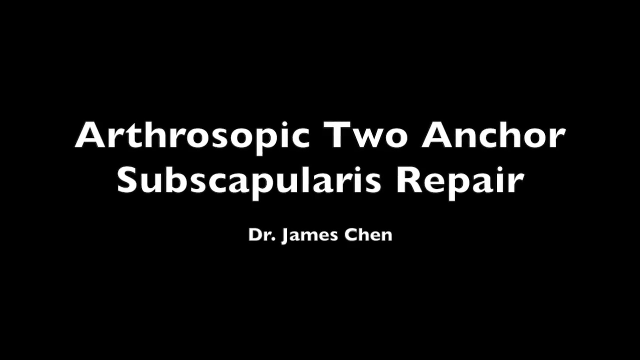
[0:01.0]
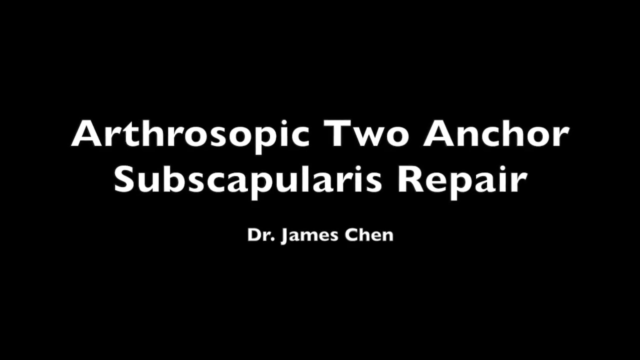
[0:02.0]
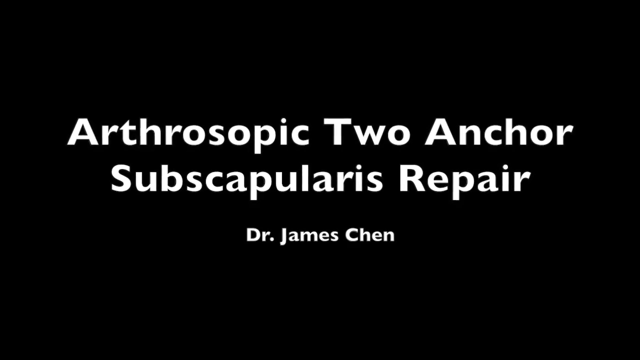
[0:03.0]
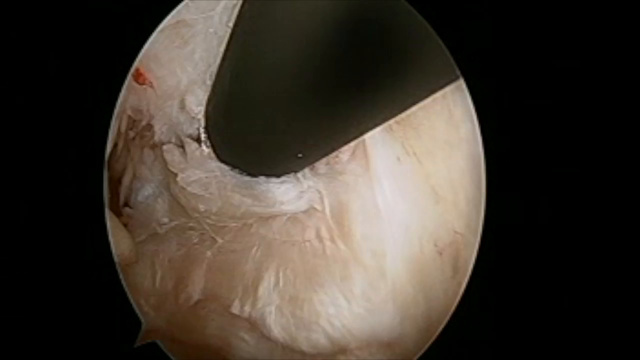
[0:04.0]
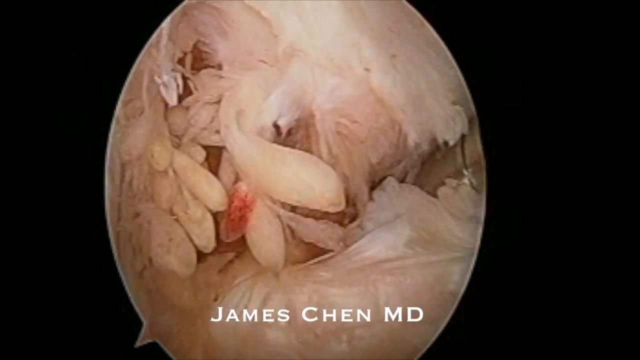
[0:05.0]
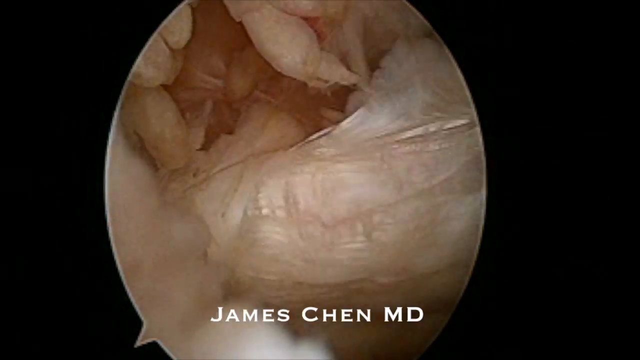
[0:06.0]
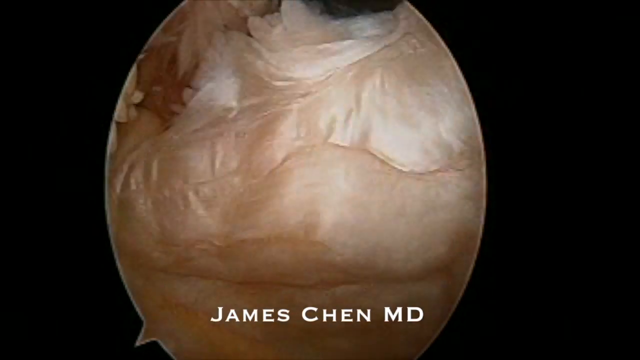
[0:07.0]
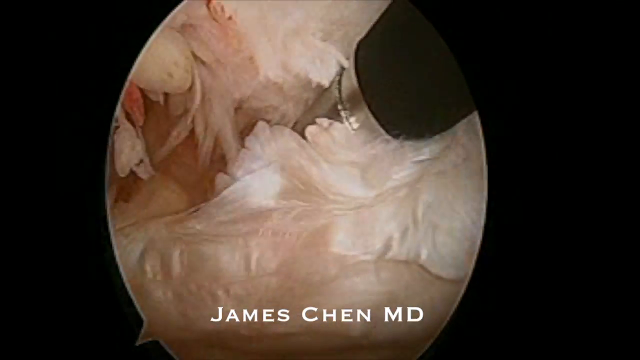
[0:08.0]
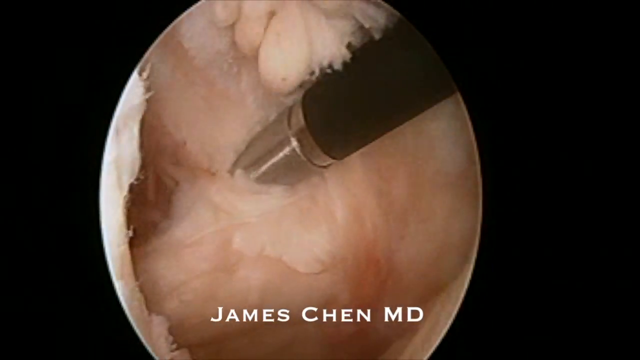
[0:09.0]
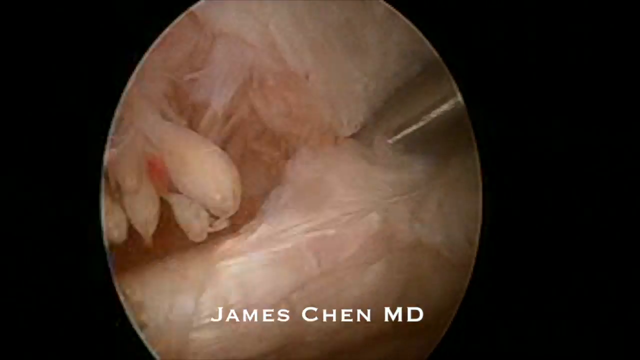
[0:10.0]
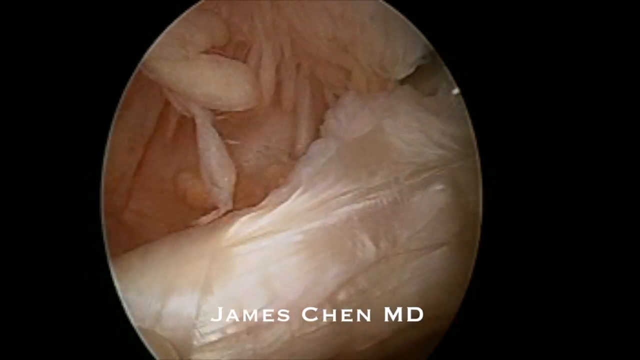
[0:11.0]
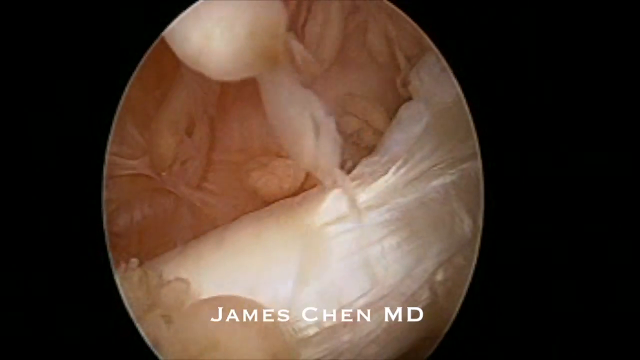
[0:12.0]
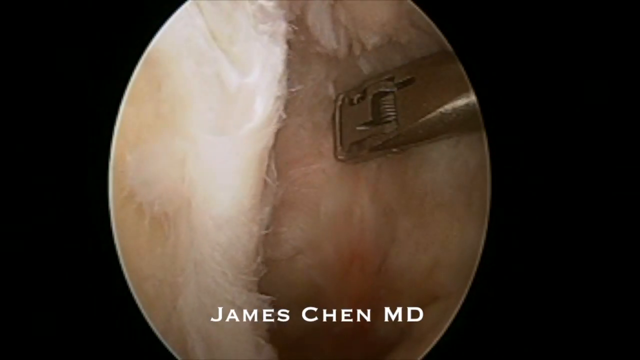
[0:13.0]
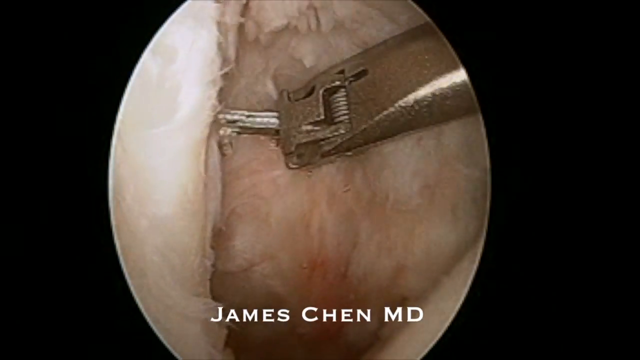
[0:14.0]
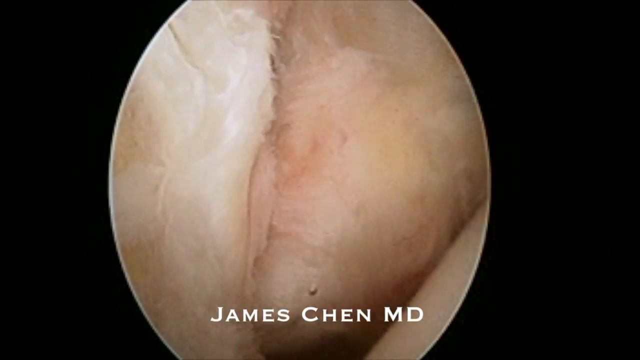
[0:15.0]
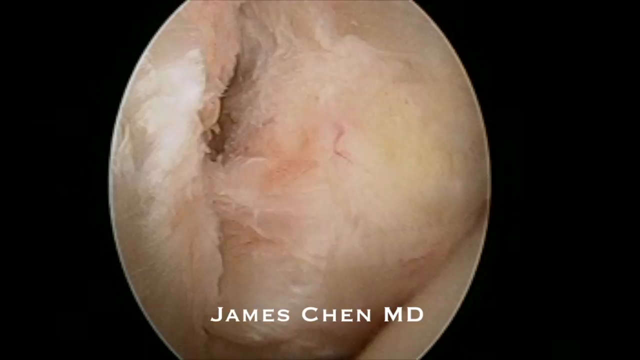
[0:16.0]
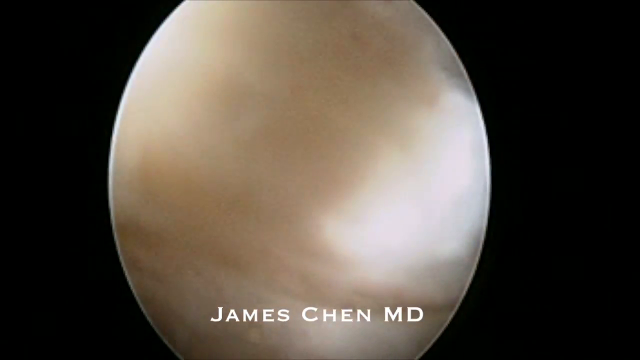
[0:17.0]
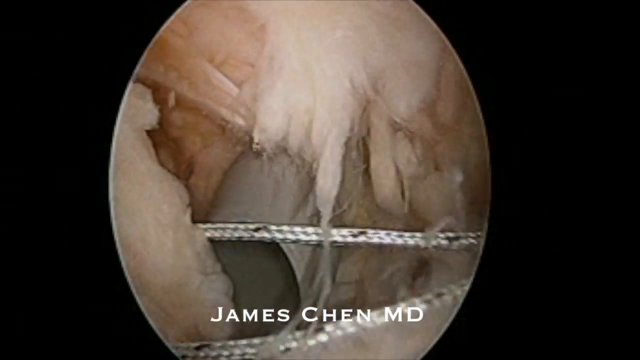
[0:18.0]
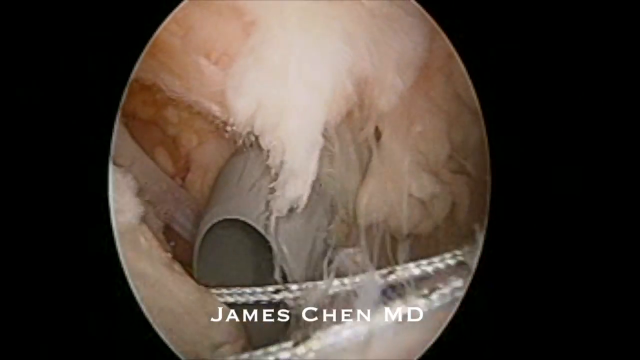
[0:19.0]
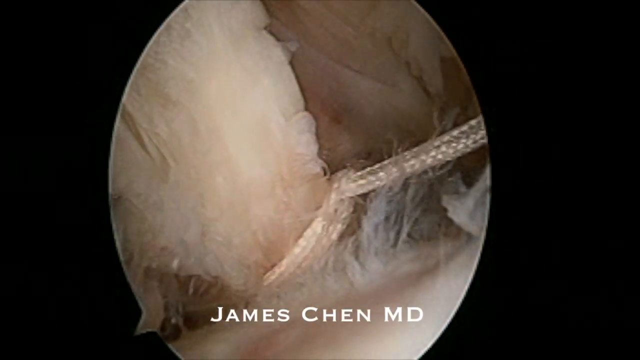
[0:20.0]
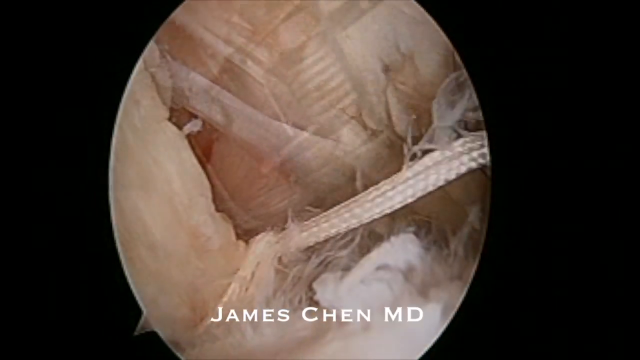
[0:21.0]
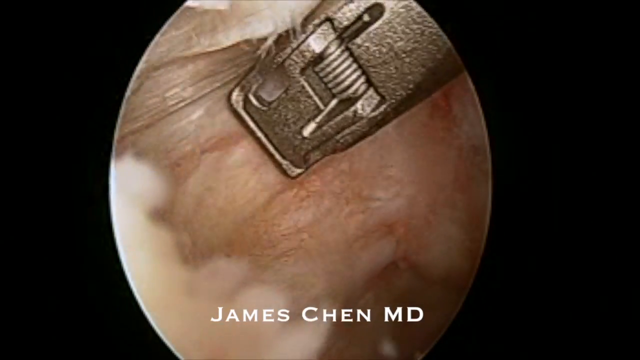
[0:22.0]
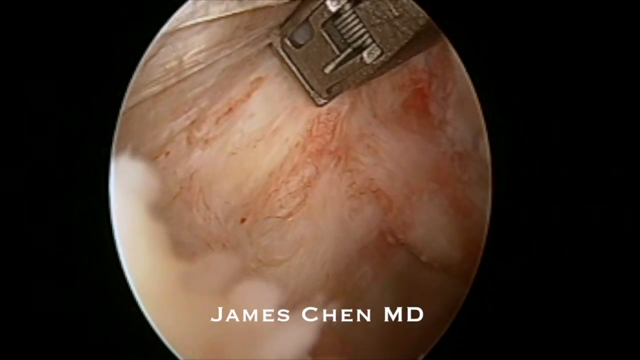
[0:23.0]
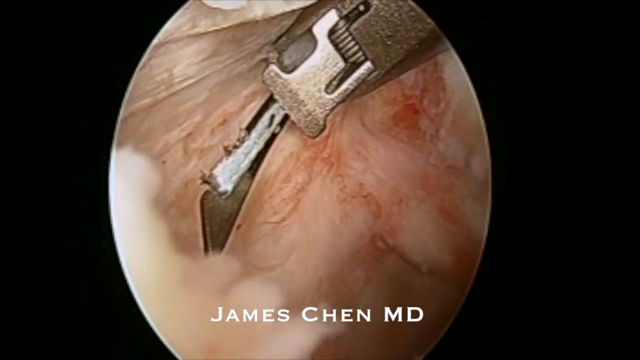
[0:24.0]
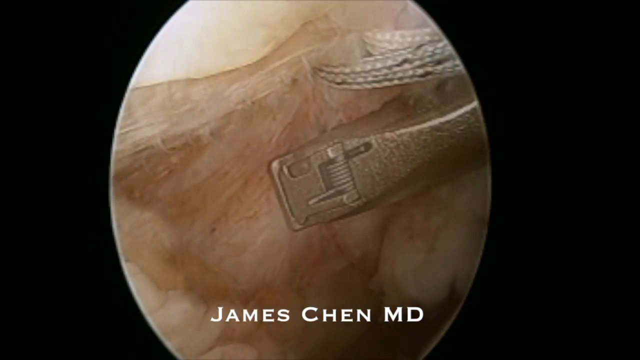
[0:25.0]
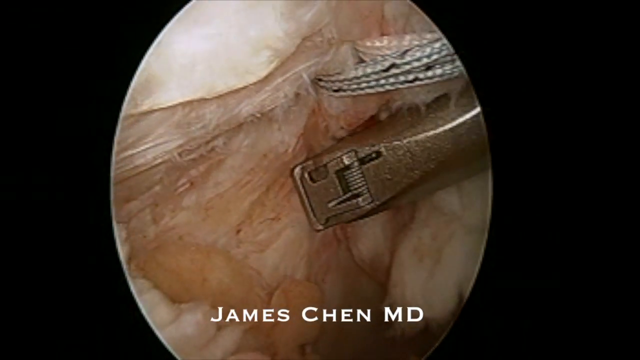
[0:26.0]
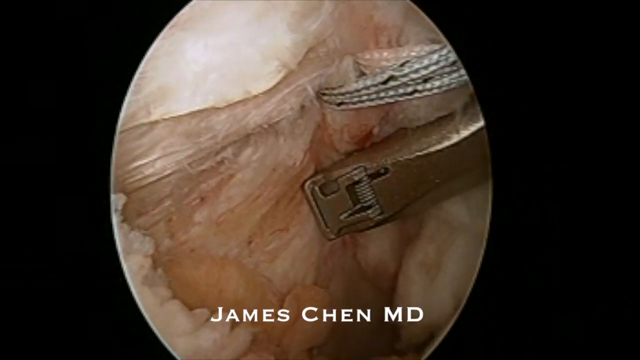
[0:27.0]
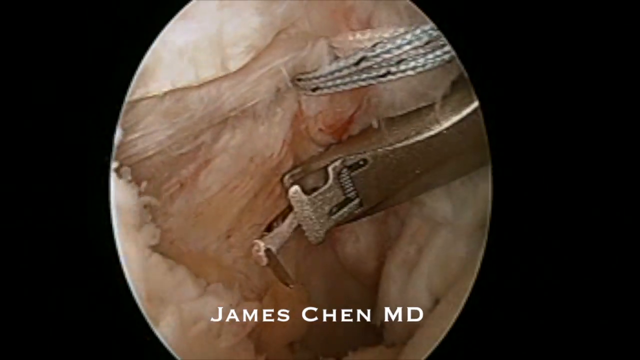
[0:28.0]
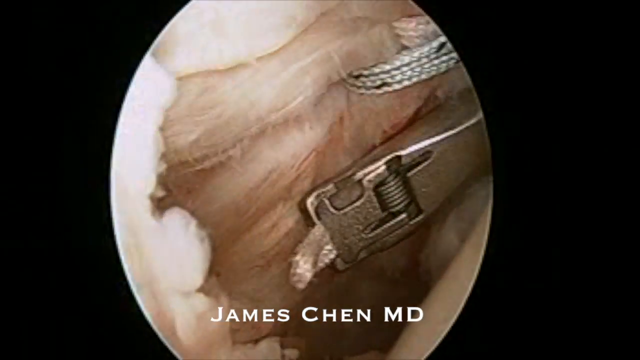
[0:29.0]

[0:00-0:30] White text on a black screen reads "arthroscopic two-anchor subscapularis repair", and underneath it says "Dr. James Chen". The video then moves to a camera inside the body, which moves about. A black instrument with a silver top moves various pinkish objects out of the way; these objects flap and almost look like something hanging down, or seeds. A silver tool or instrument comes in; it looks like a cutting instrument, and it cuts something inside and passes in front of the camera. A white rope also comes into view. The silver tool appears again, and a blade comes out of it. All the while, the camera inside the body moves about as the doctor works, and the view is circular, with a black outline at the sides of the screen.